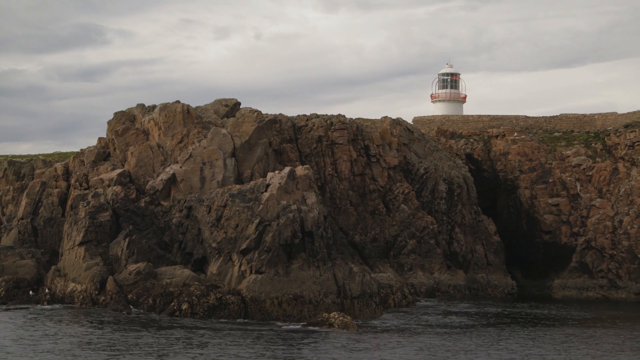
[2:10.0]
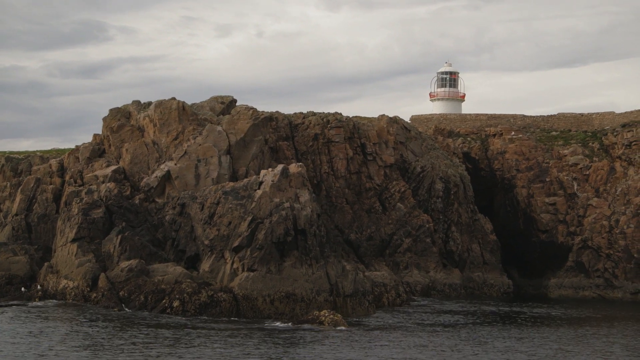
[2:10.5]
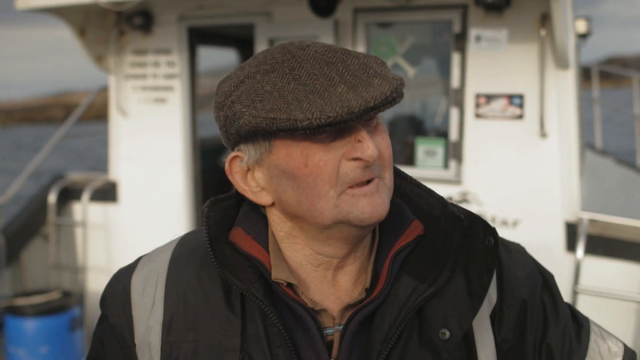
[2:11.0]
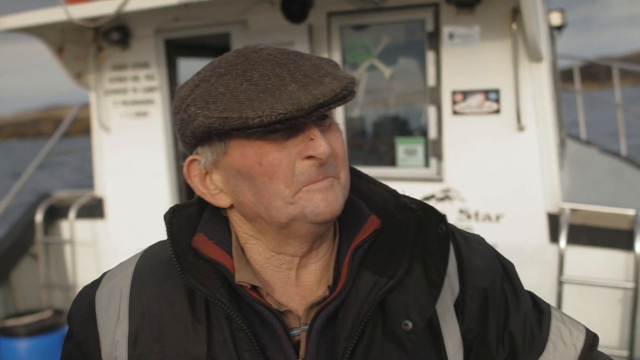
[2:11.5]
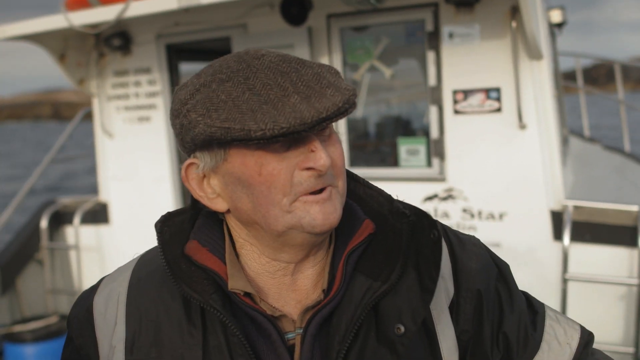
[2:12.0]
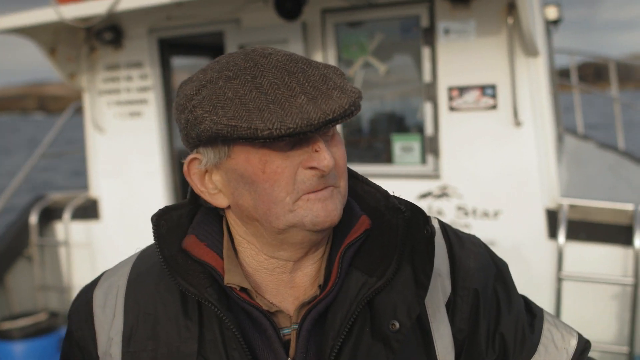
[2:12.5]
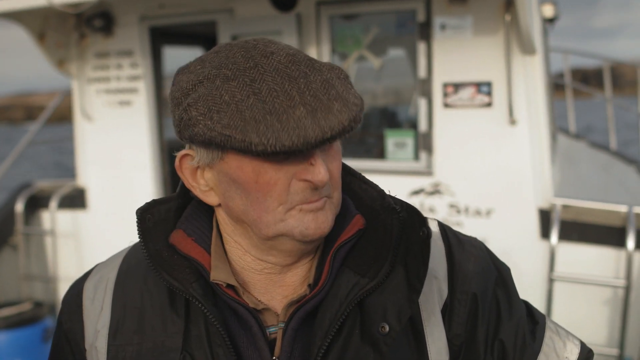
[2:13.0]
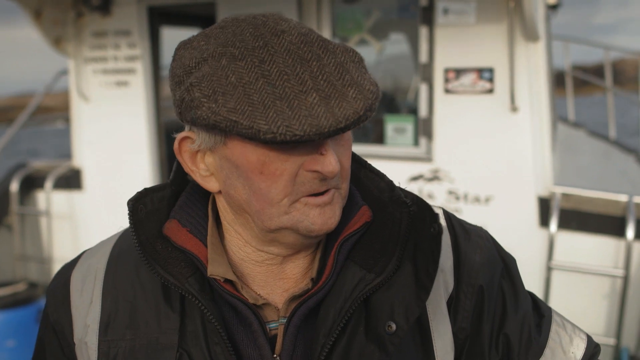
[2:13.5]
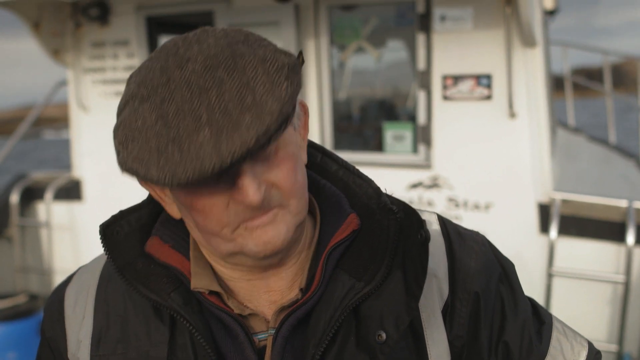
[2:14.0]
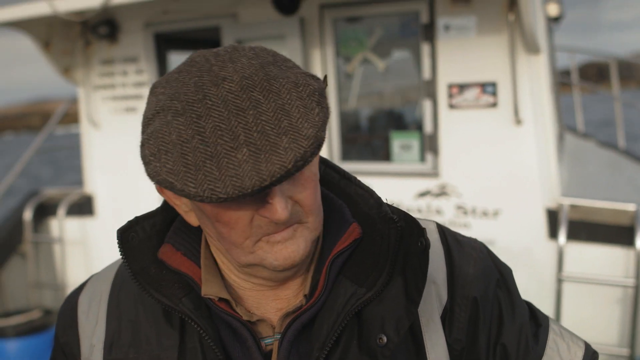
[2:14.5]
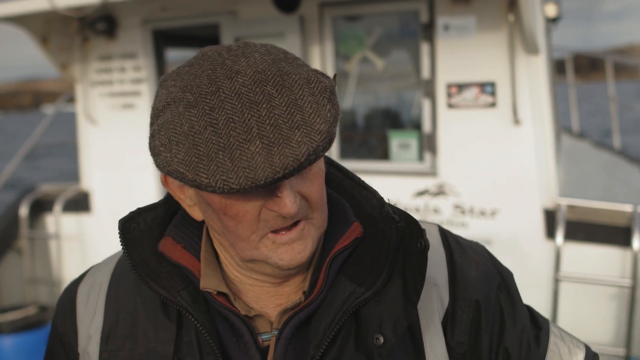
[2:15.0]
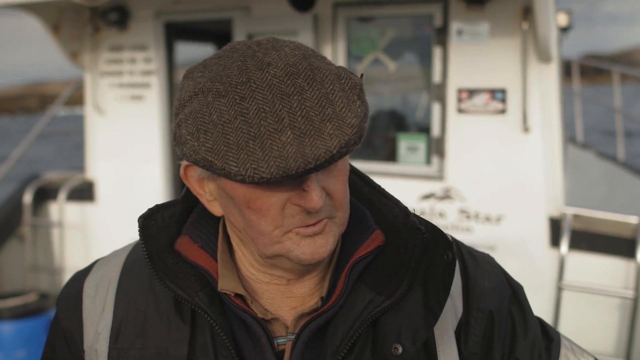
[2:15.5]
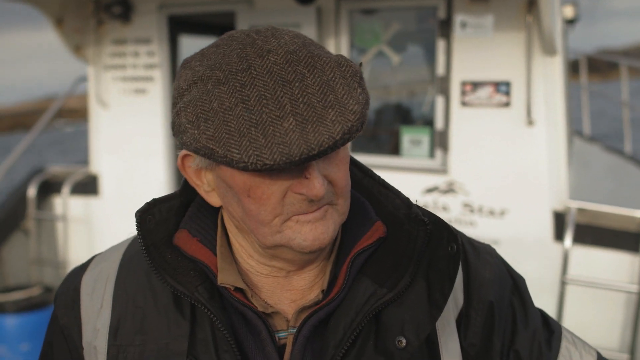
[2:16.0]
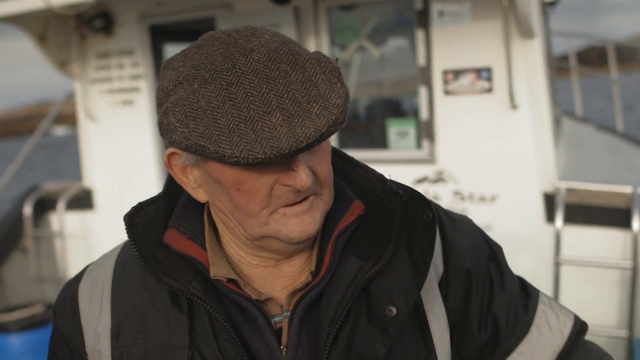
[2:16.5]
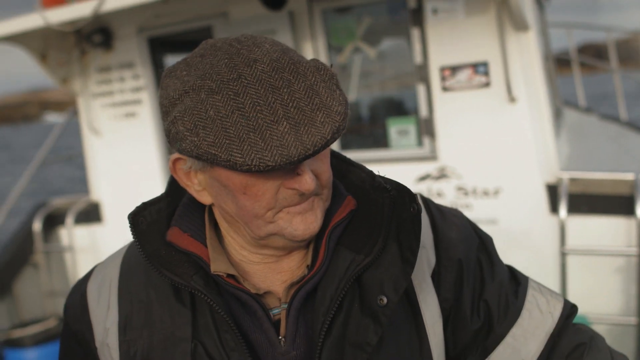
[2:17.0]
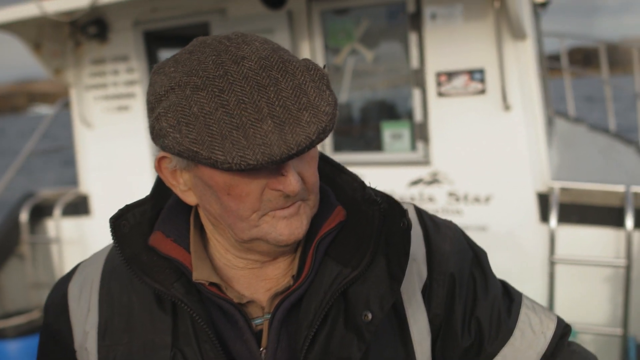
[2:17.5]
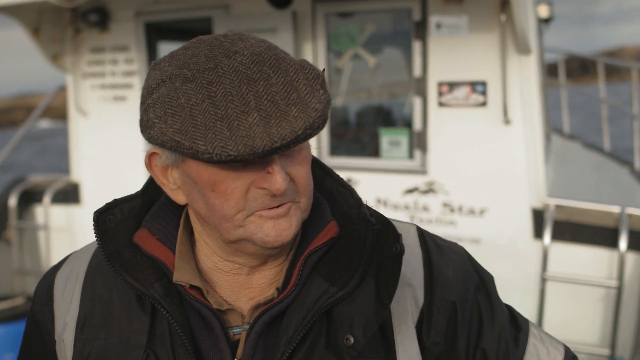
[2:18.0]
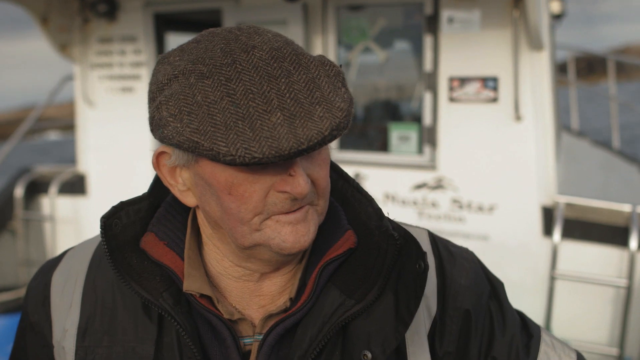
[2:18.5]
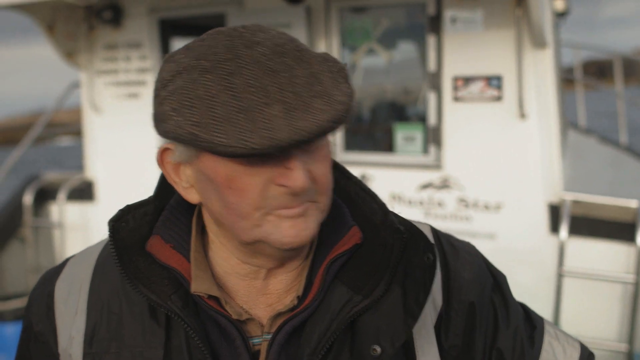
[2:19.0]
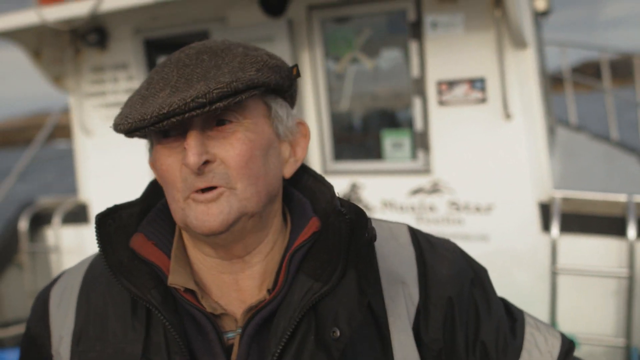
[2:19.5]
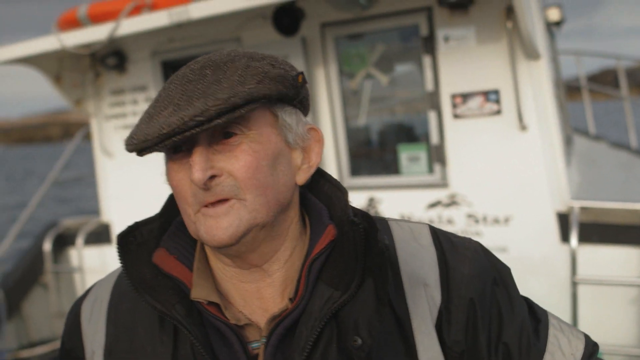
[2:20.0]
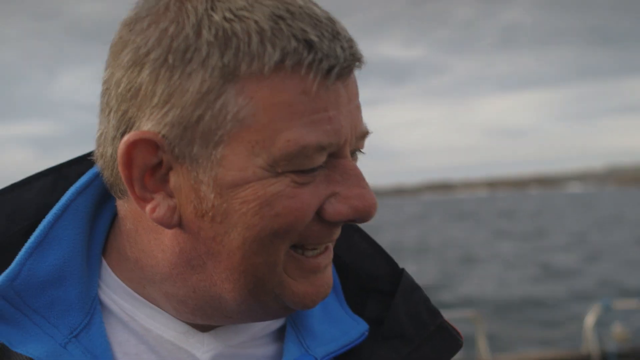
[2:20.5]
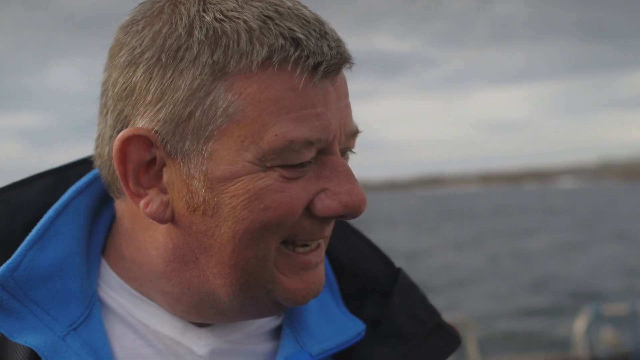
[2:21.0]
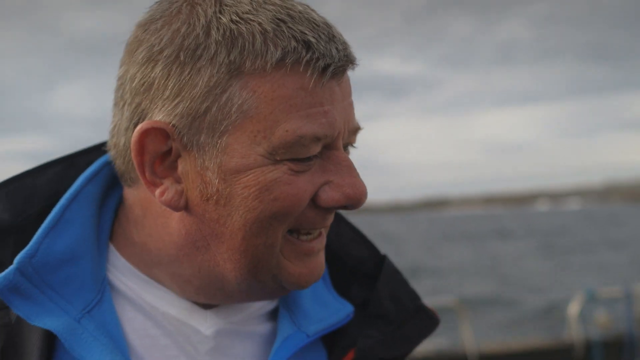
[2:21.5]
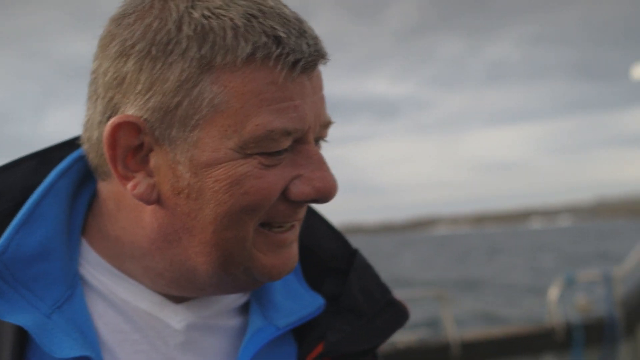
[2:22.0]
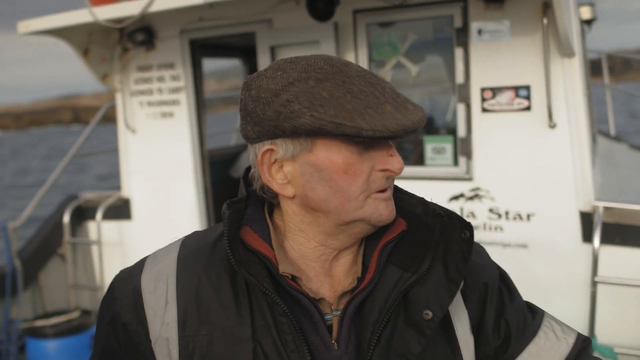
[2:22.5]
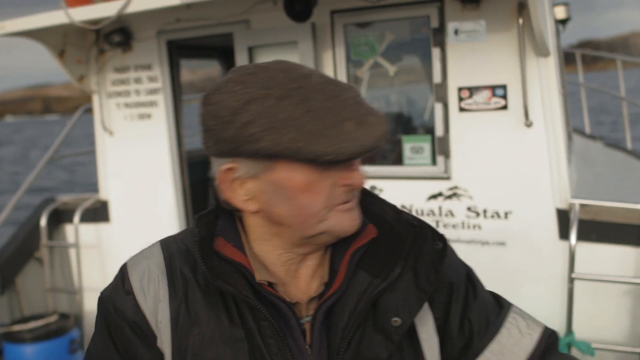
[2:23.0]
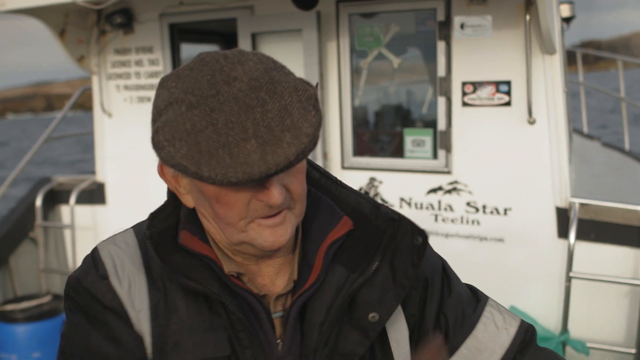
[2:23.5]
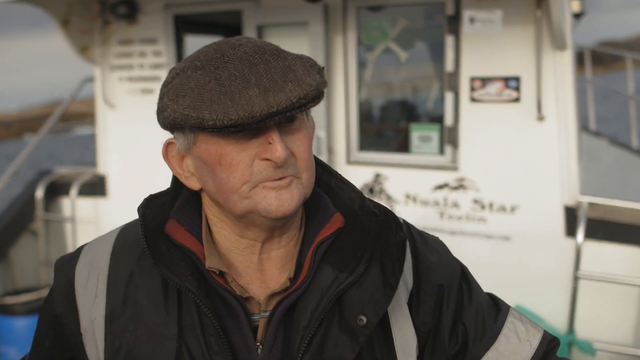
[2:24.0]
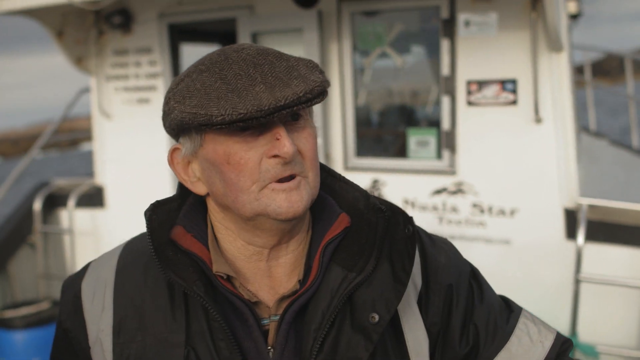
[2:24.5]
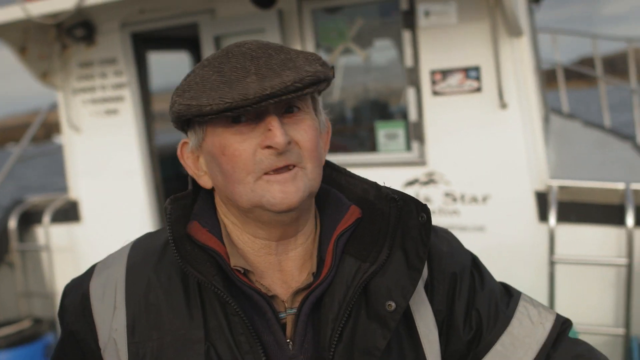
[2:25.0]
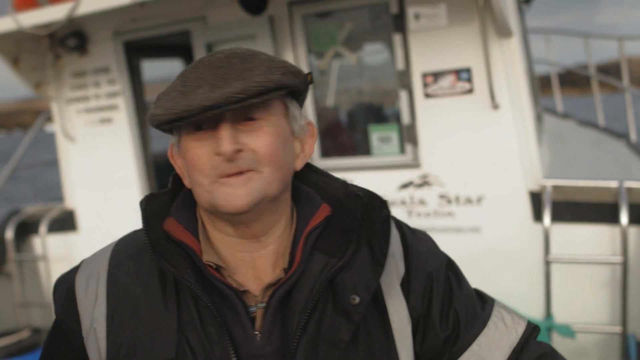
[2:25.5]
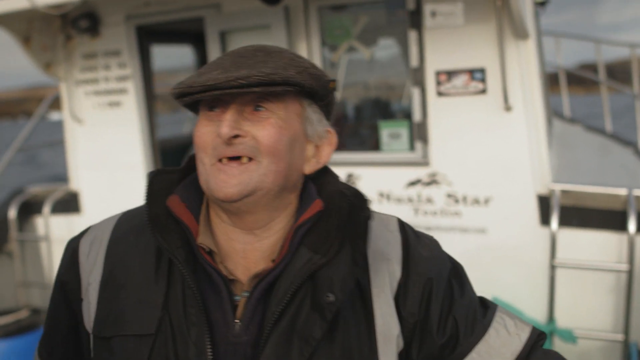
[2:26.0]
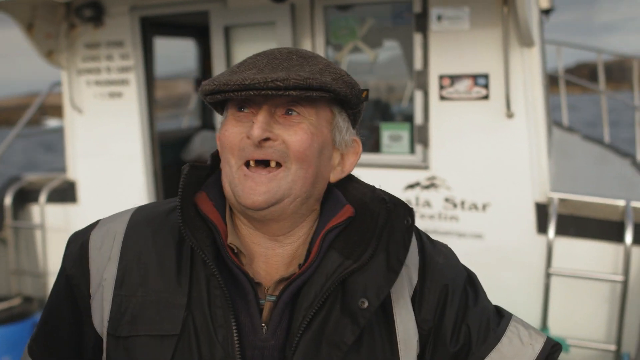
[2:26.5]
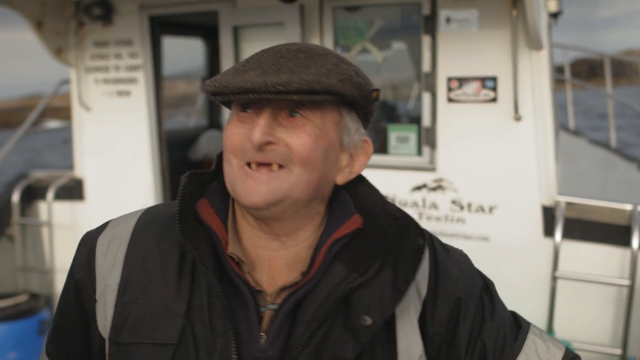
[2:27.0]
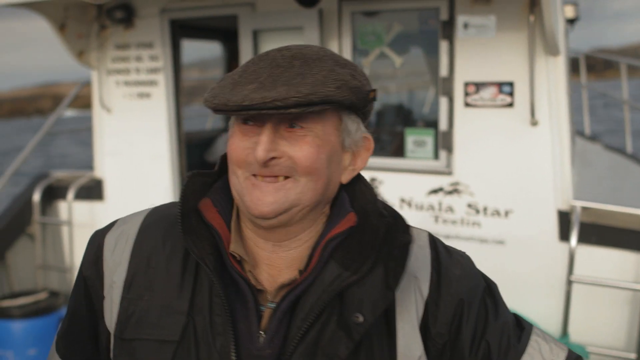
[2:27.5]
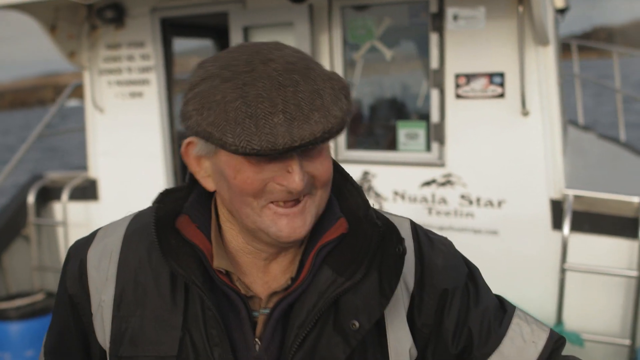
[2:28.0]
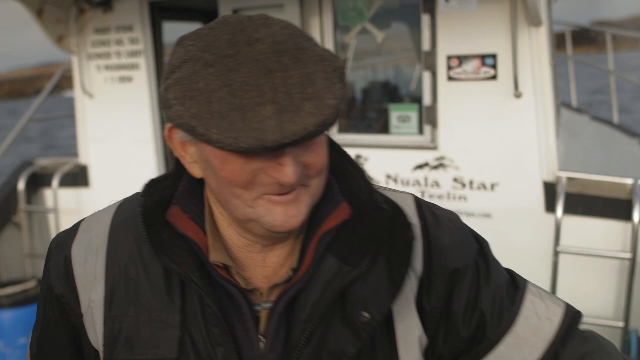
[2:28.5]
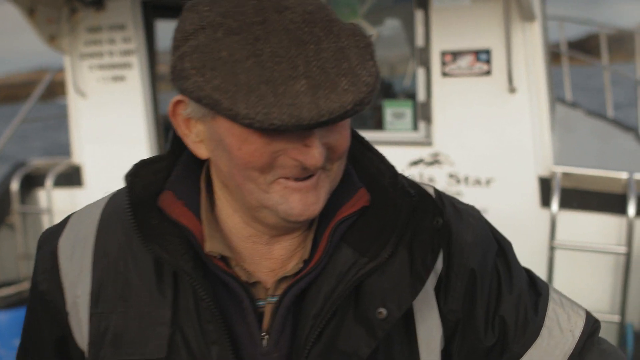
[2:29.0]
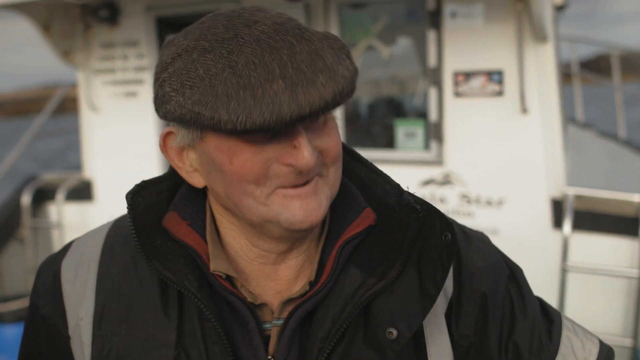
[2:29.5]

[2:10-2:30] The two men get closer to the shore of the island plateau in a small boat that looks like a little fishing boat. The old man is talking, and the man speaking with him smiles; they are both laughing. The old man has about three teeth.